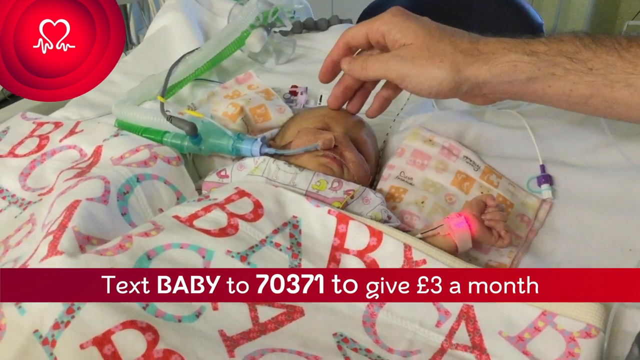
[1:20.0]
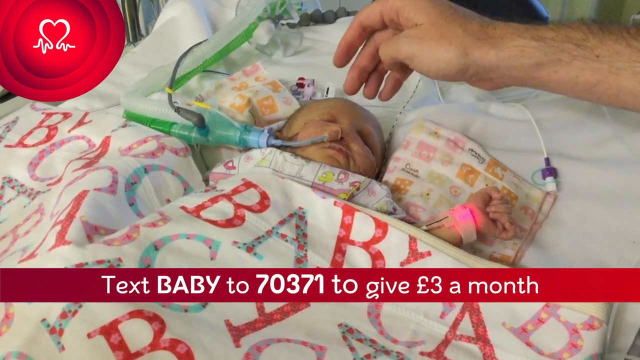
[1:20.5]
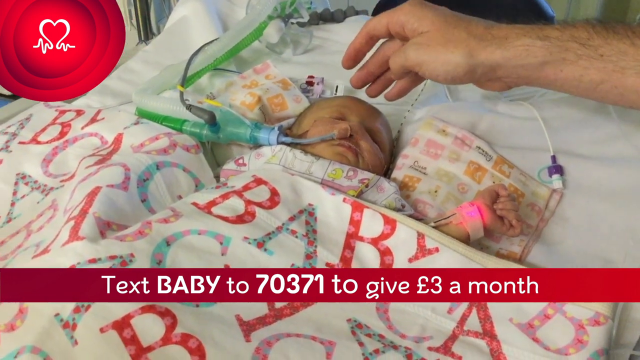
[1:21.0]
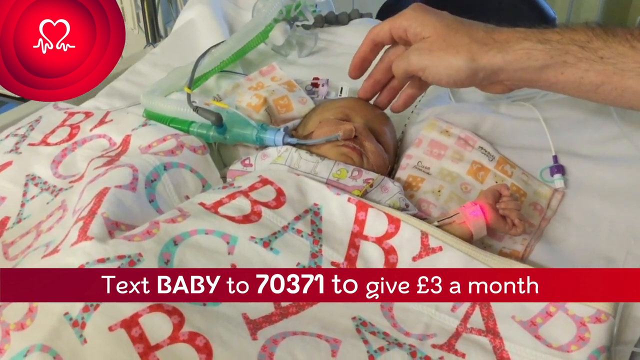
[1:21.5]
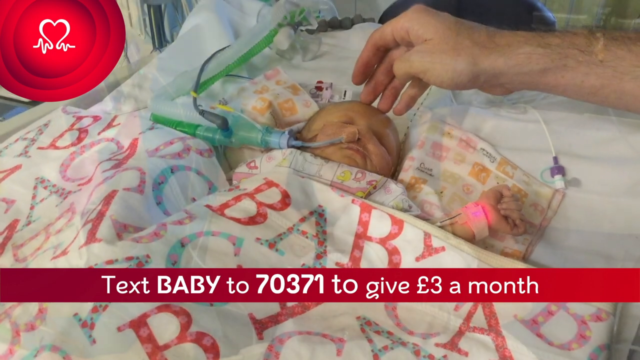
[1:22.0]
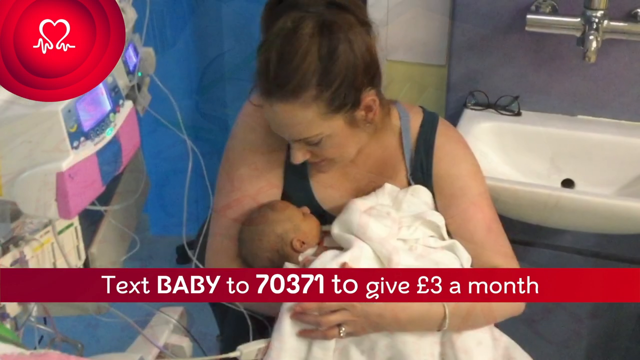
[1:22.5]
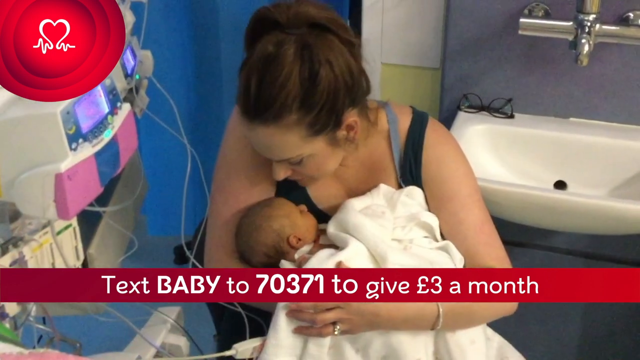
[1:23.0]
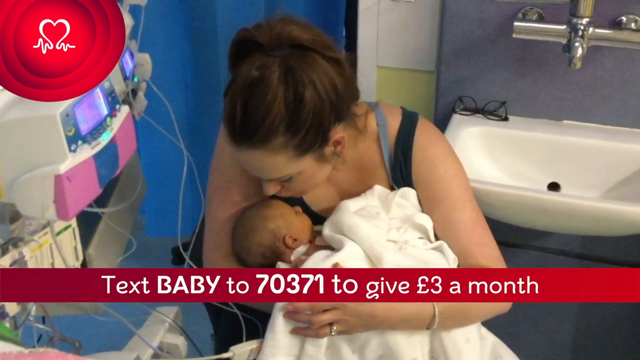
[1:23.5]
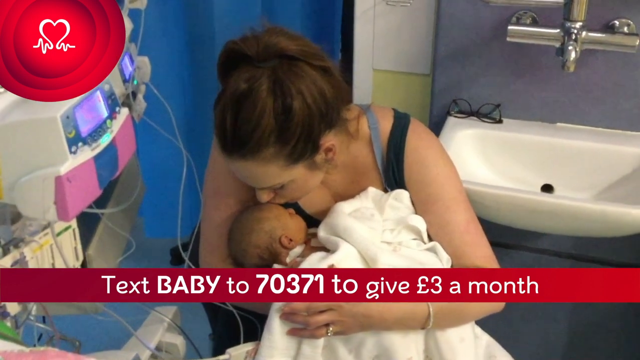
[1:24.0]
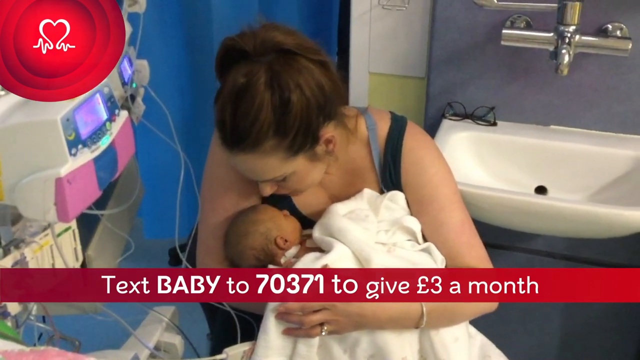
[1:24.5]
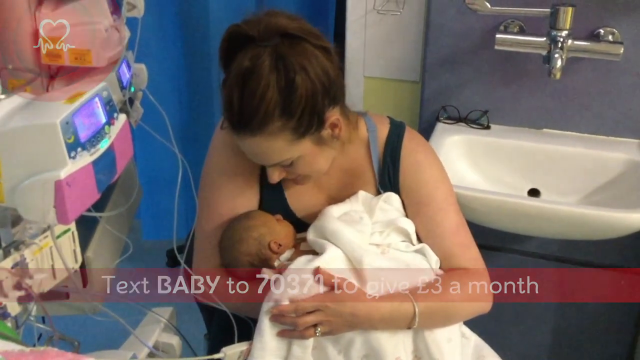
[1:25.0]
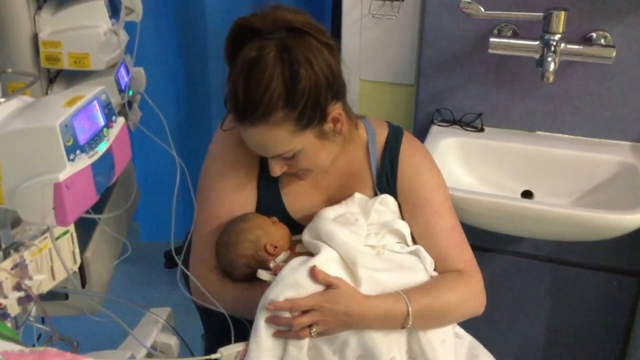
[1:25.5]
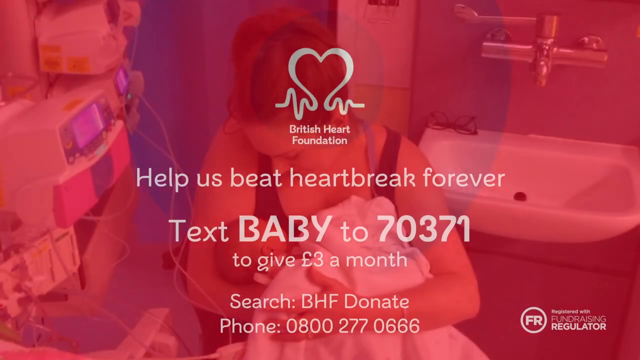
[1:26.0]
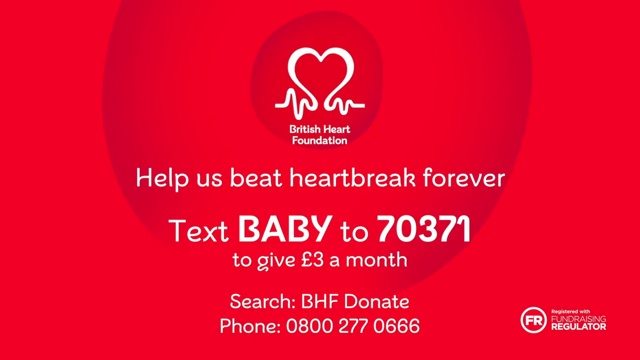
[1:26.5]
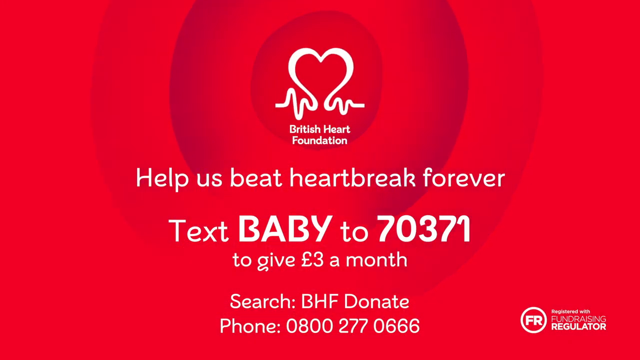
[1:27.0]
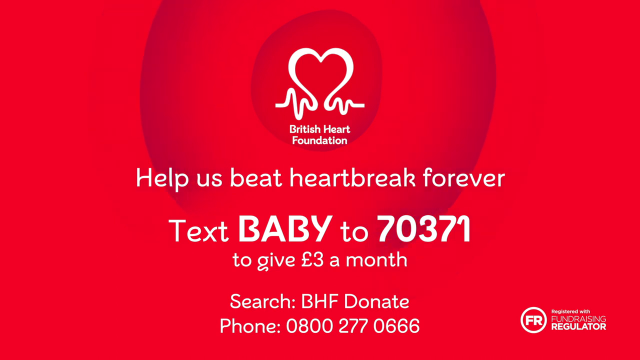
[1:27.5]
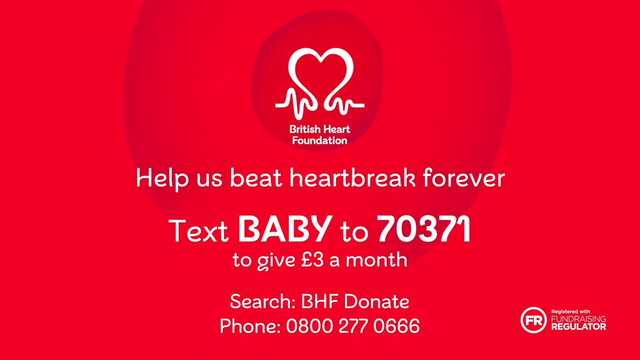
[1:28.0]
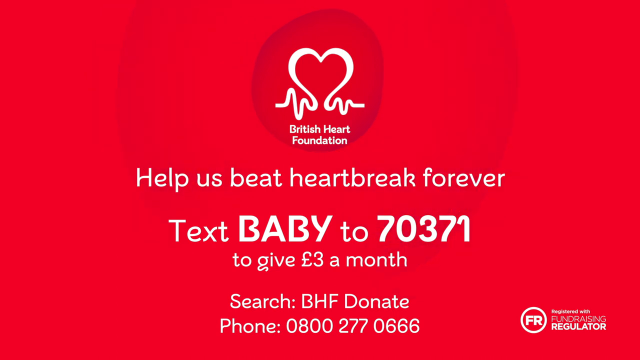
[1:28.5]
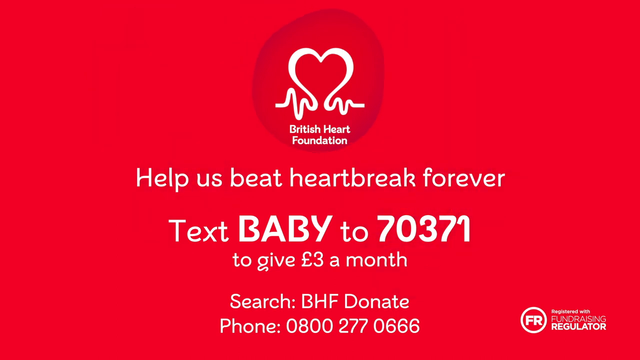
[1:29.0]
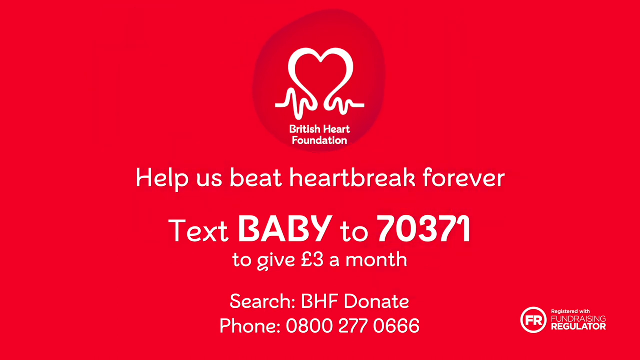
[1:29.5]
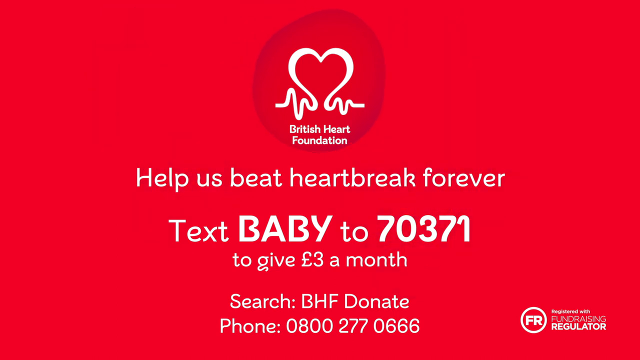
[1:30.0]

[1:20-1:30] Images of babies in the hospital appear: one of a baby lying under a blanket with tubes in its nose, and another of a mother cradling a baby who is hooked up to a monitor on the left side of the screen. She kisses the baby on the forehead. Below these images a red text bar reads "Text BABY to 70371 to give three pounds a month." The screen changes to a red end title card with the British Heart Foundation name and logo at the top, followed by "Help us beat heartbreak forever." Below this it reads "Text BABY to 70371 to give three dollars a month," then "Search: BHF Donate, Phone: 0800-277-0666."